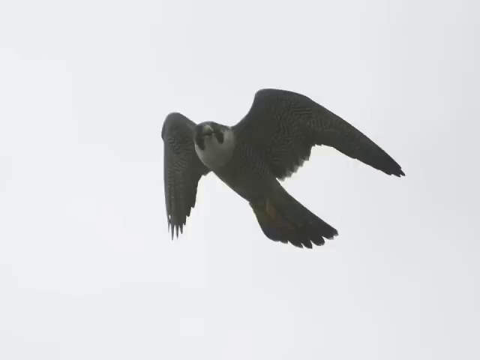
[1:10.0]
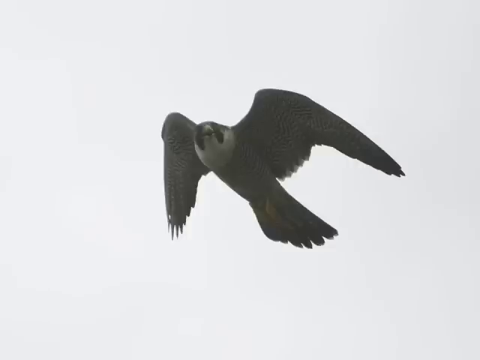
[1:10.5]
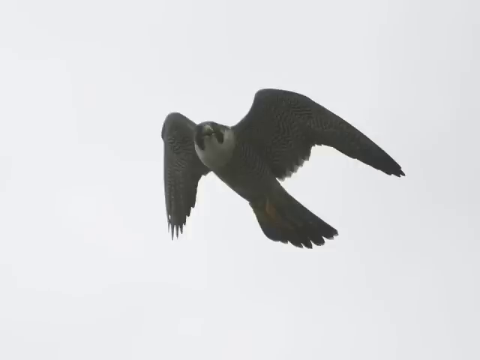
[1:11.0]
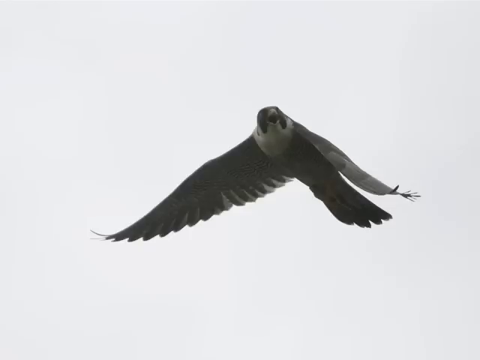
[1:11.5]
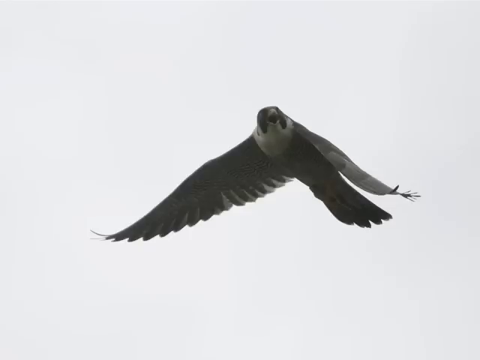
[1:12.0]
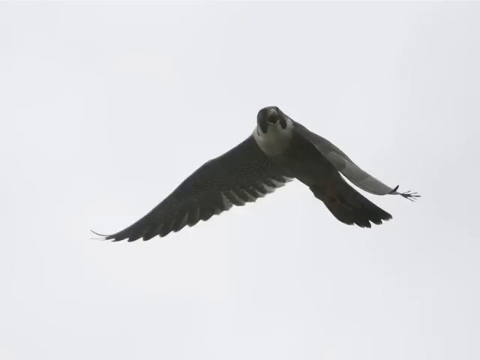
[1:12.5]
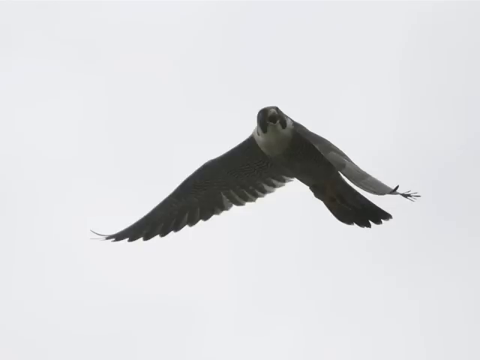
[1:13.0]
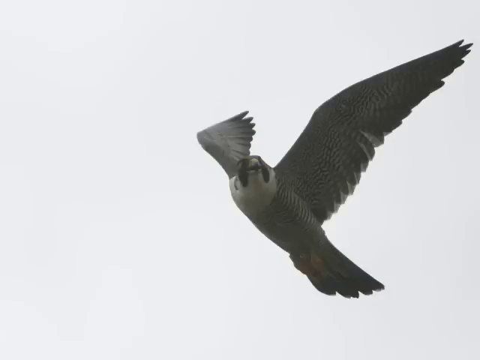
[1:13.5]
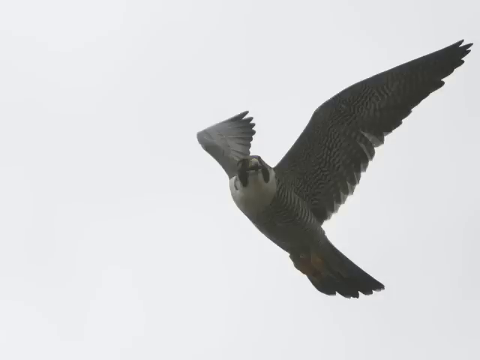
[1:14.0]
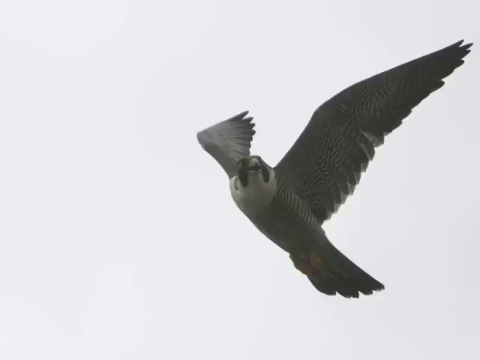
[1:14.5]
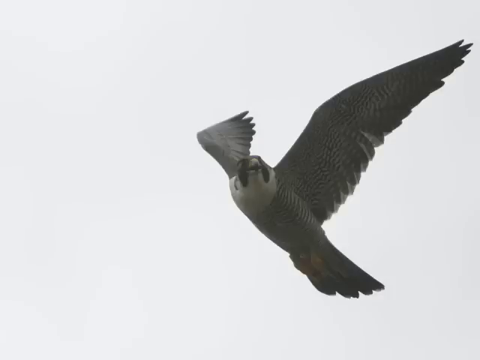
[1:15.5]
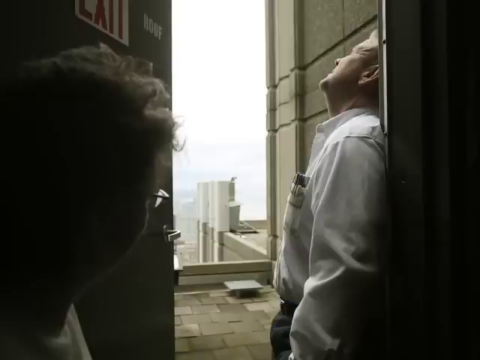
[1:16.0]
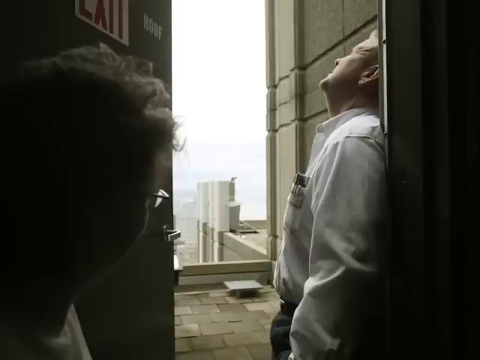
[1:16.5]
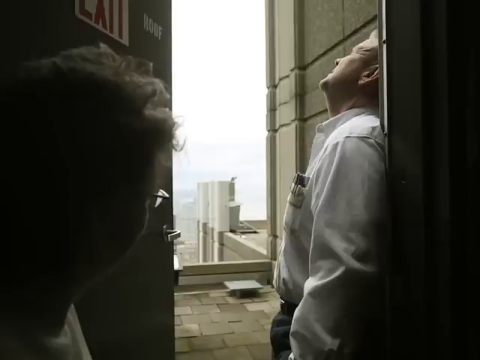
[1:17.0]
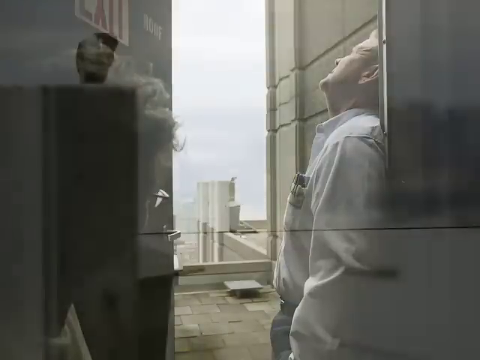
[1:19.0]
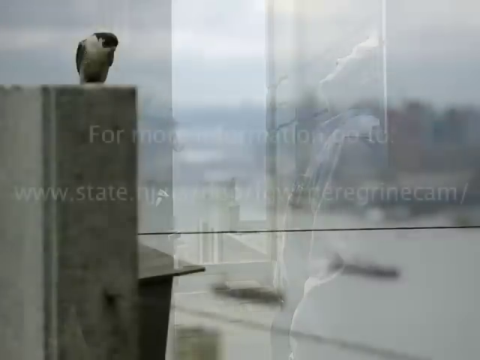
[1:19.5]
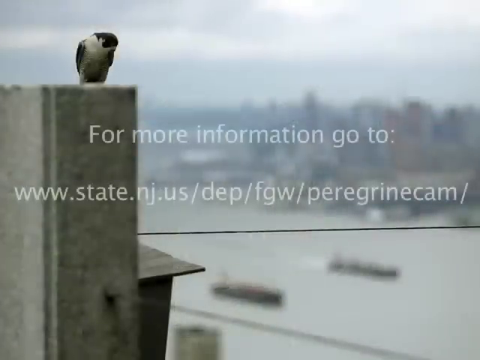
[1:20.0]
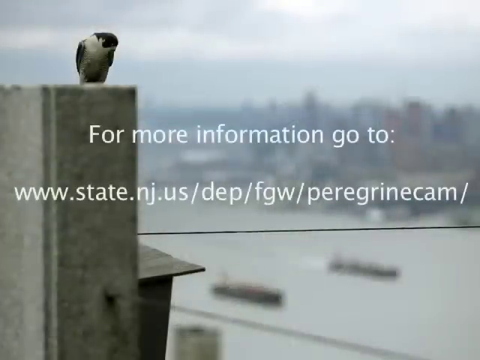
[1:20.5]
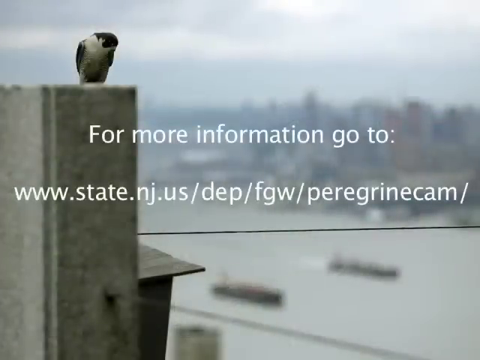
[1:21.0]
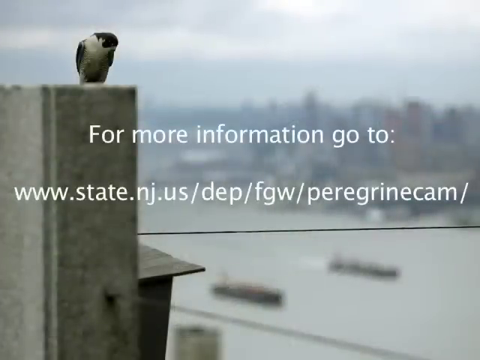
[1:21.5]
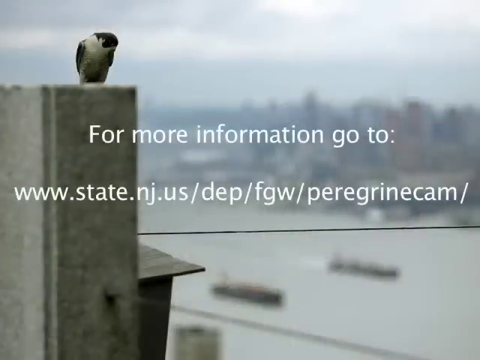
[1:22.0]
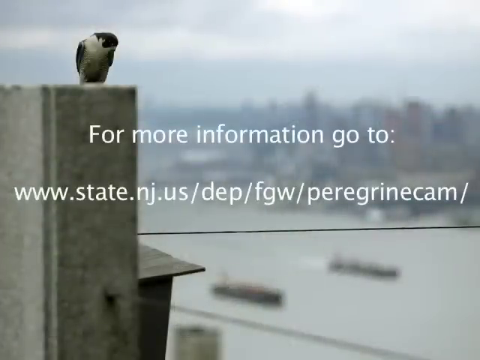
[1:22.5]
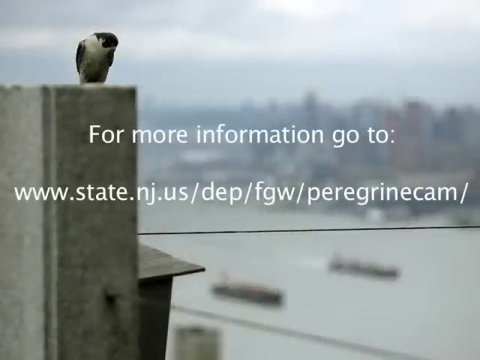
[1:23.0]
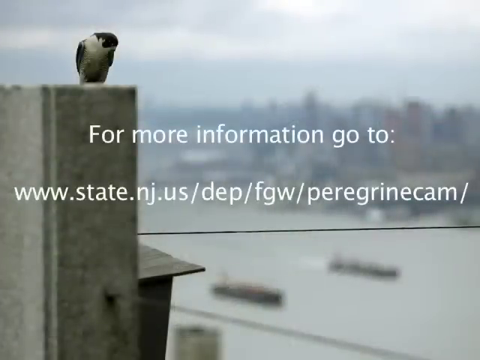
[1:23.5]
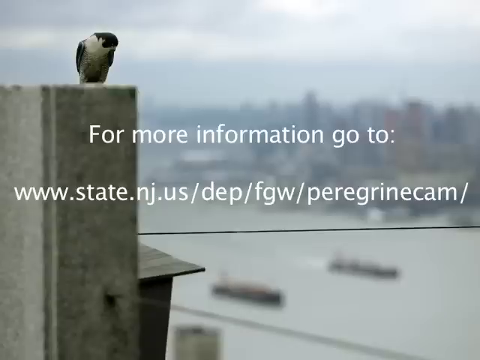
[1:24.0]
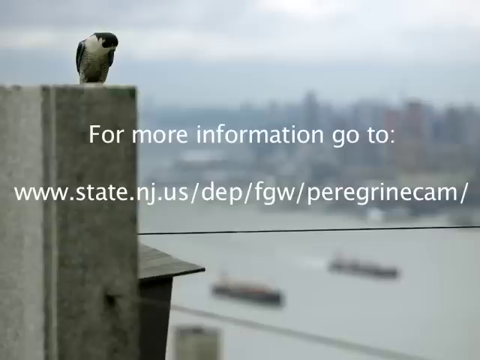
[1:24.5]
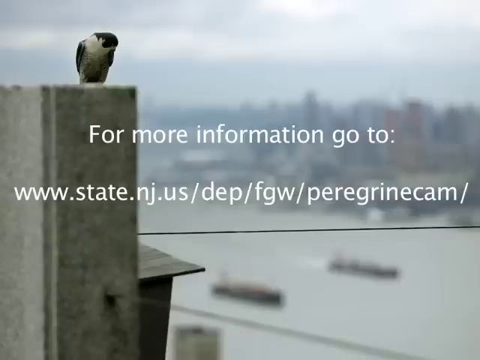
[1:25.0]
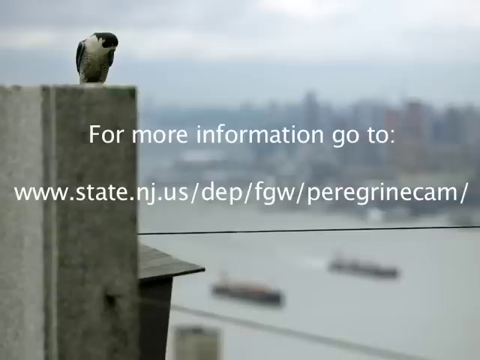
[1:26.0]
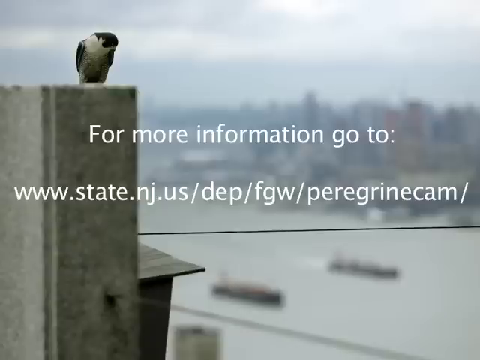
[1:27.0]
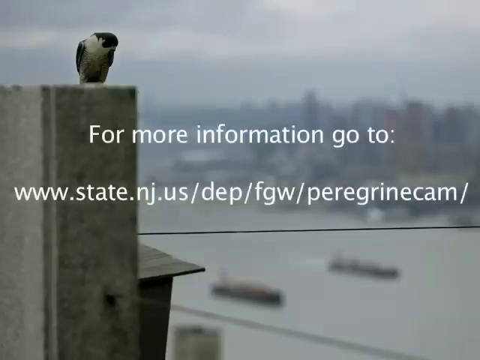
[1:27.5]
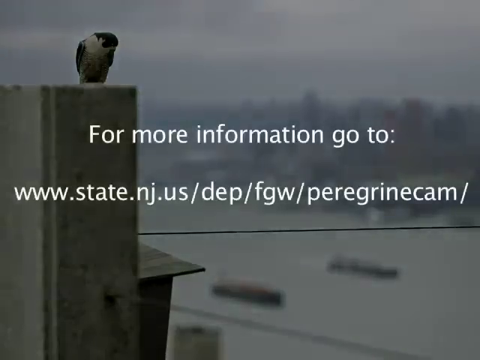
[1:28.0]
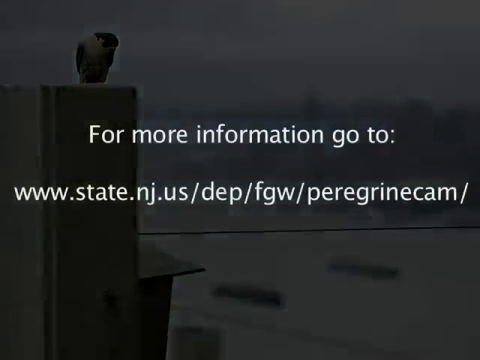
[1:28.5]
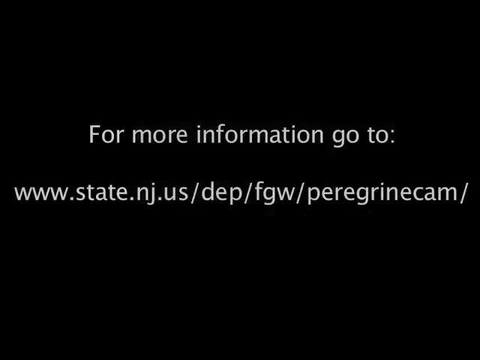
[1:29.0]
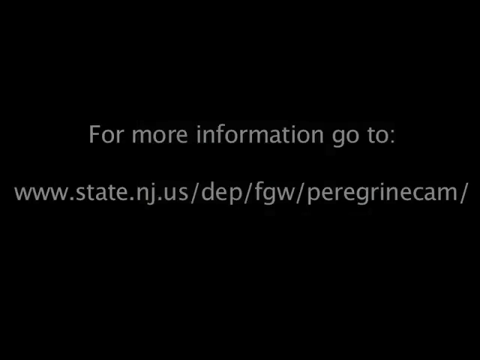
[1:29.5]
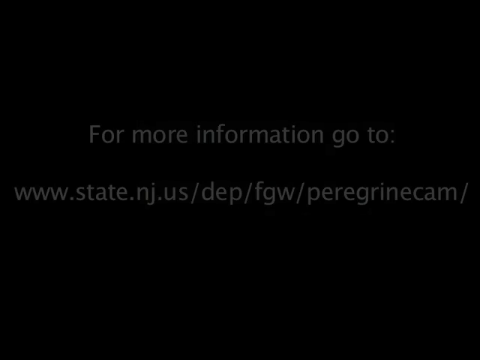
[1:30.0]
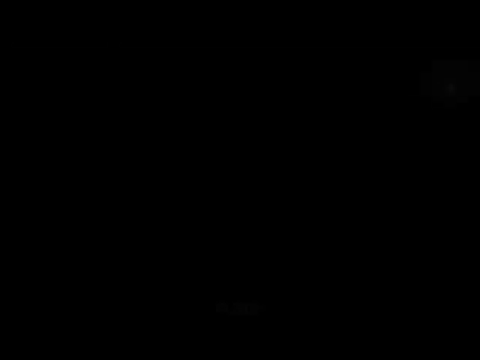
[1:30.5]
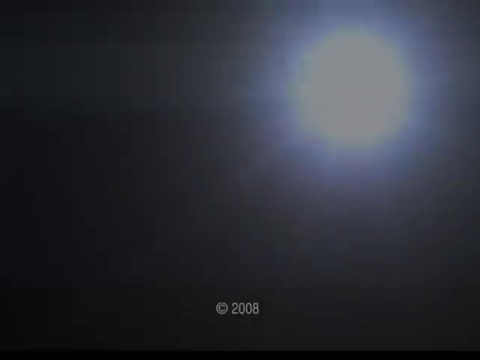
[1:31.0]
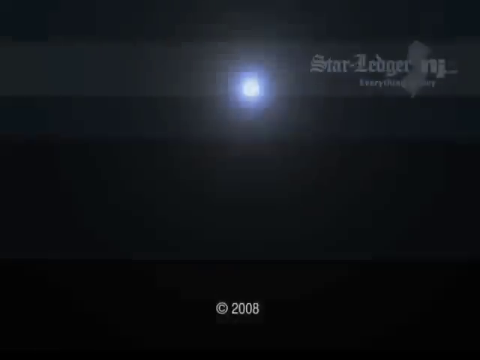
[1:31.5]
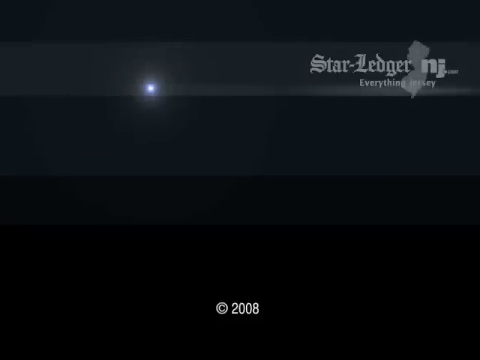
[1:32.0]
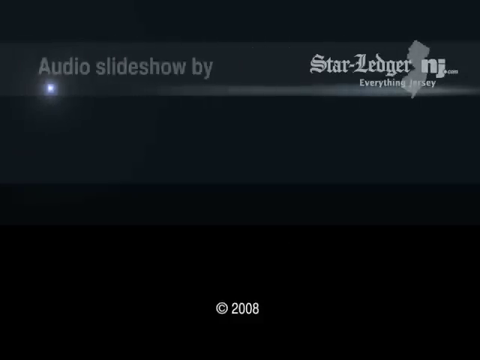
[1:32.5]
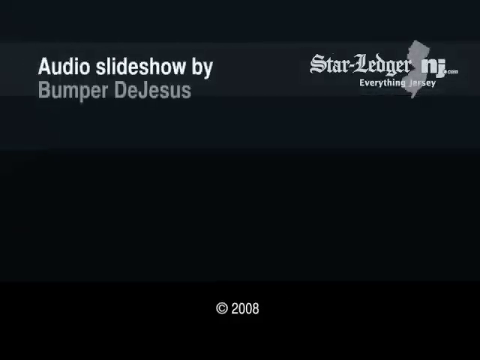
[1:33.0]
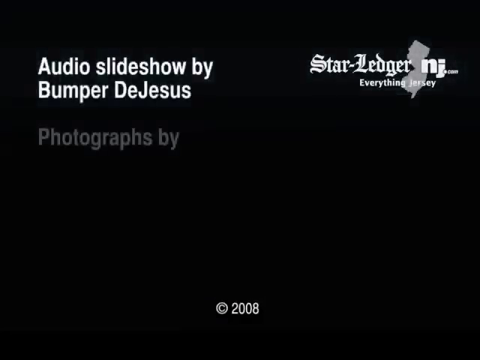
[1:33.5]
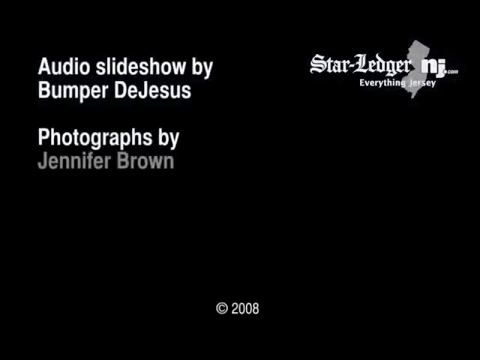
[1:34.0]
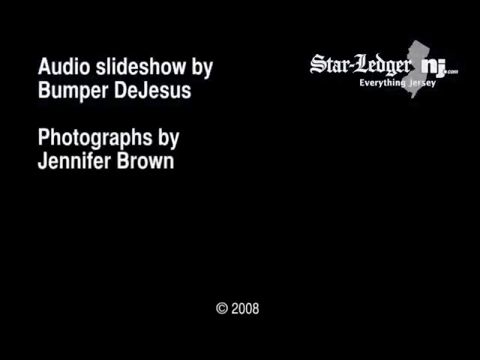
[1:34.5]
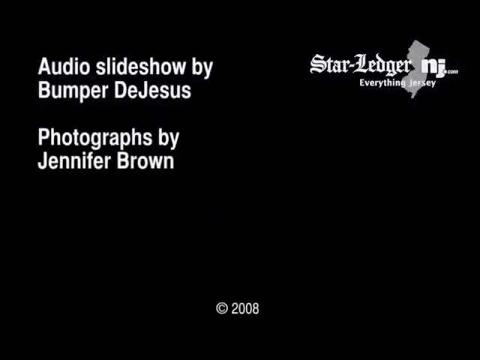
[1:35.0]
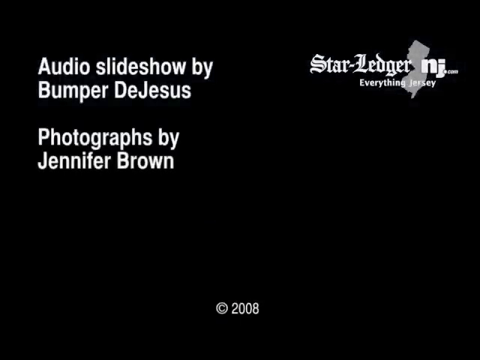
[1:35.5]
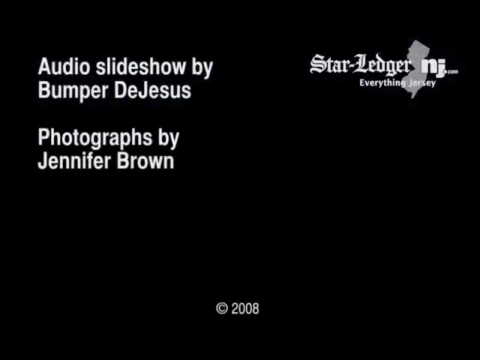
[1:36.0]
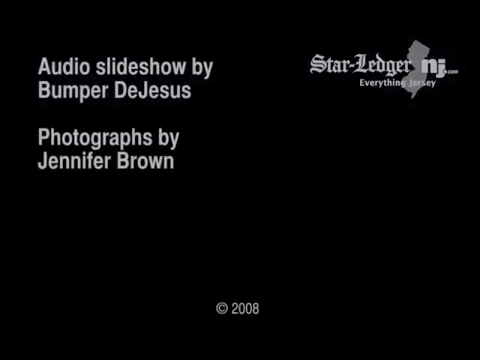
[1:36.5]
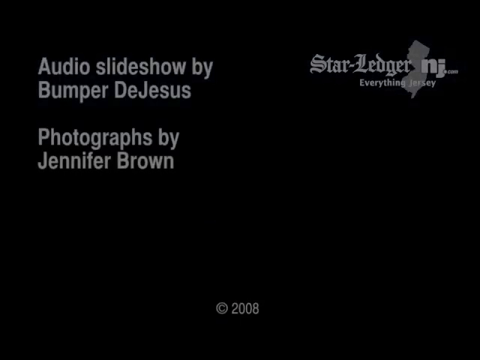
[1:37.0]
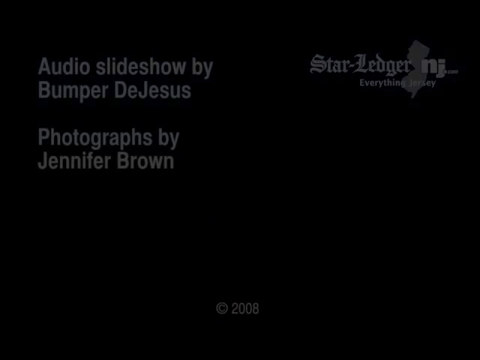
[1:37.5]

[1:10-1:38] An image shows the falcon in mid-air with its wings spread, followed by another in which the wings are turned slightly down at a different angle, and another shot of the bird in full flight with its wings pointing upwards. Two people, a man and a woman, are then seen kind of hiding behind an exit door on the roof of the building, looking up into the sky. A closing title scene has white text in the centre reading "for more information, go to www.state.nj.us". The background image shows a peregrine falcon up on the concrete block at the top left, with a blurry background of what is probably the Jersey city skyline and a couple of boats almost blurred into the river. The video slowly fades to black, and then the text fades out as well. Small credits appear at the close, including an audio slideshow credit and "photograph by Jennifer Brown", with the Star Ledger NJ.com logo in the top right-hand corner.